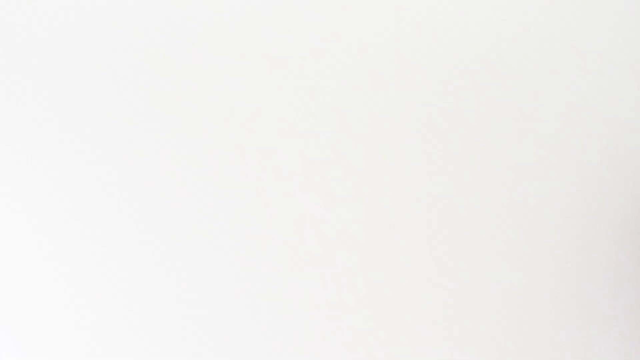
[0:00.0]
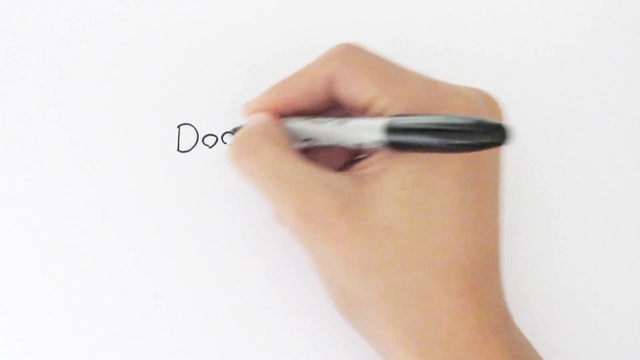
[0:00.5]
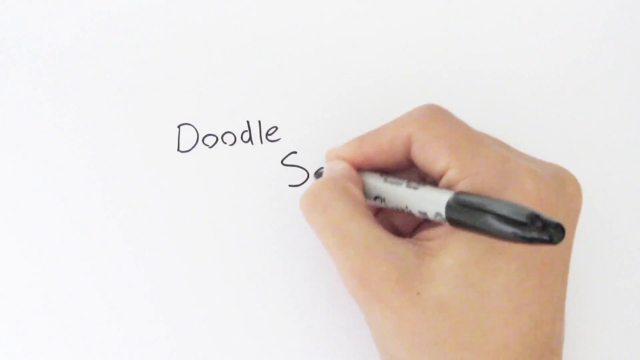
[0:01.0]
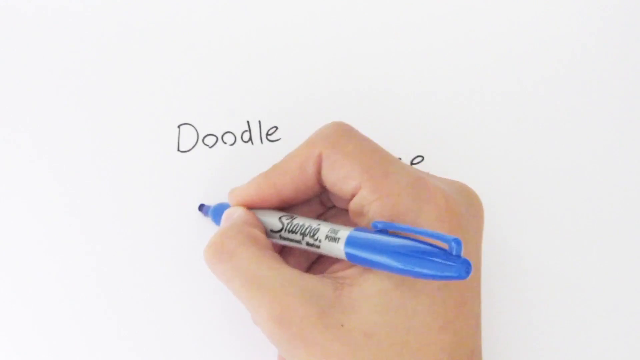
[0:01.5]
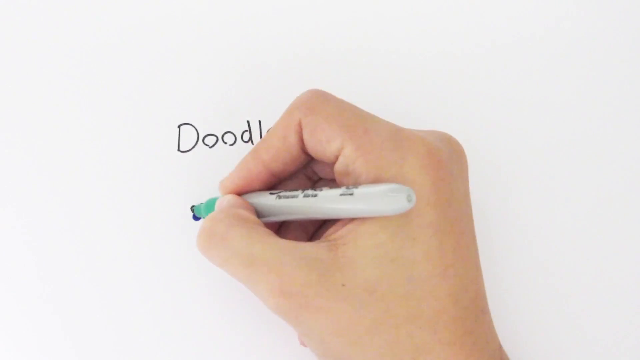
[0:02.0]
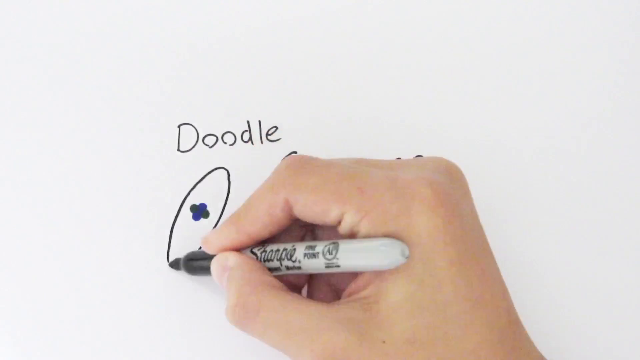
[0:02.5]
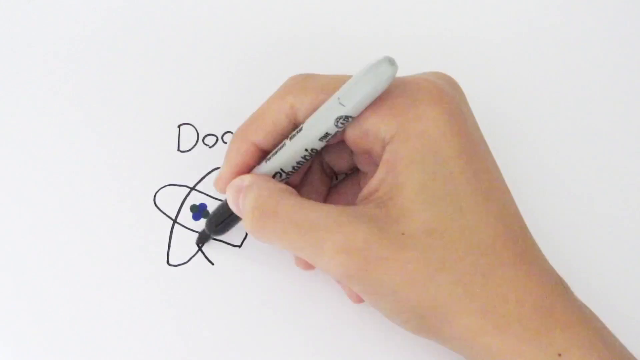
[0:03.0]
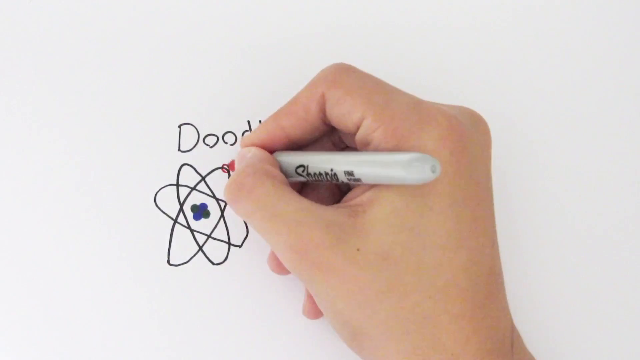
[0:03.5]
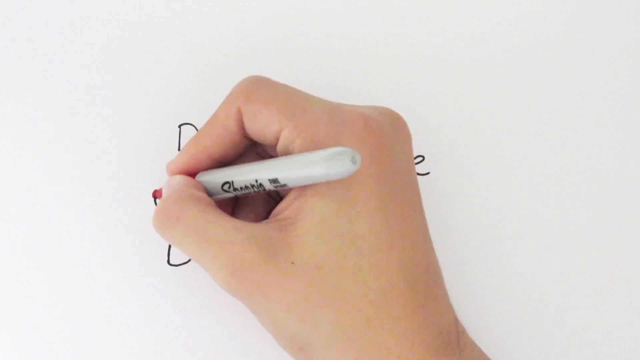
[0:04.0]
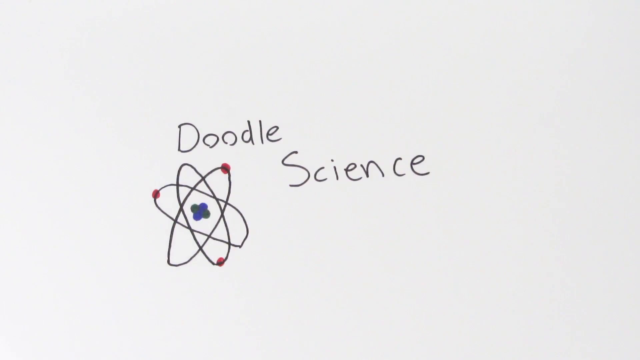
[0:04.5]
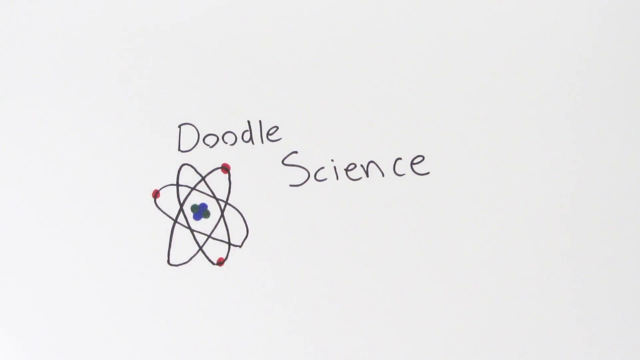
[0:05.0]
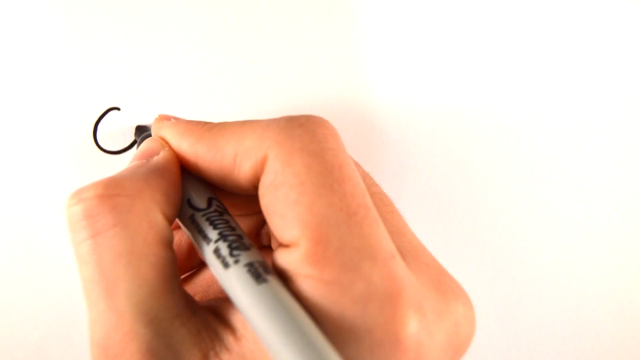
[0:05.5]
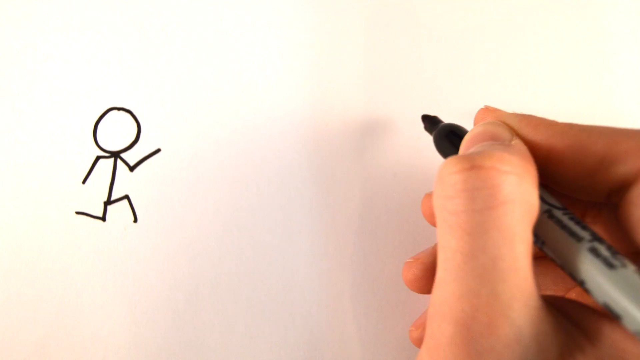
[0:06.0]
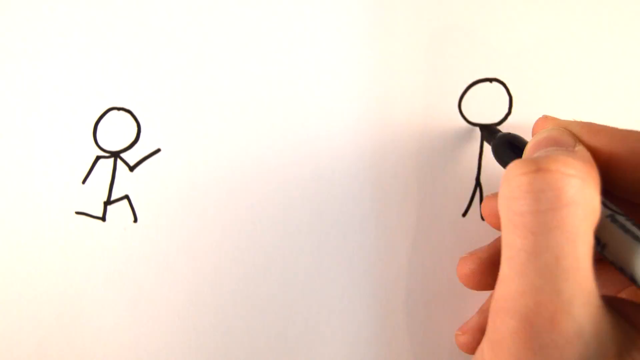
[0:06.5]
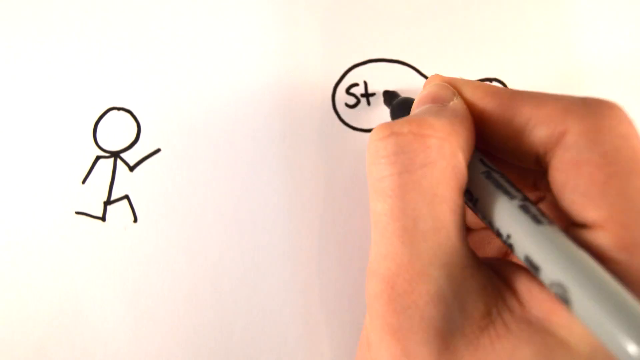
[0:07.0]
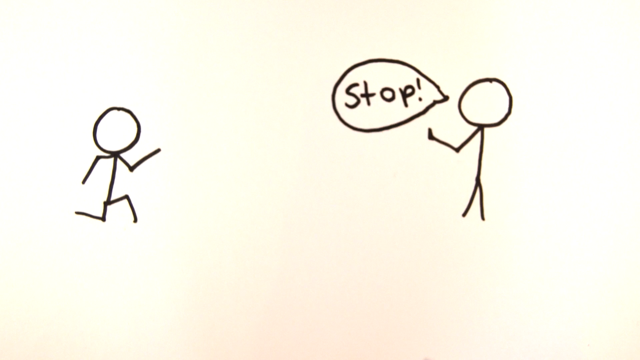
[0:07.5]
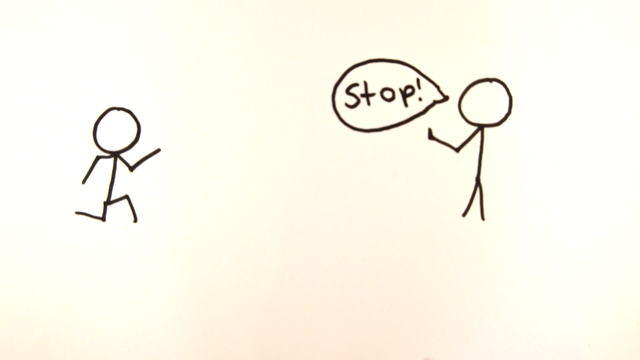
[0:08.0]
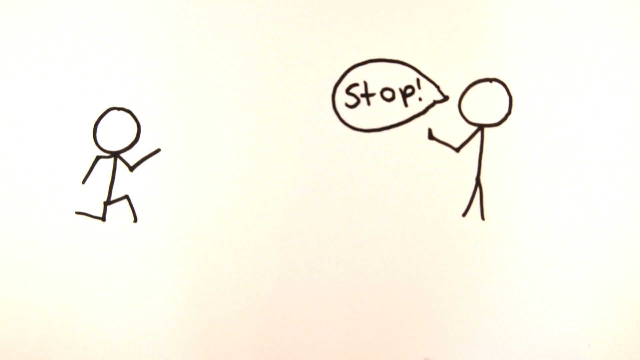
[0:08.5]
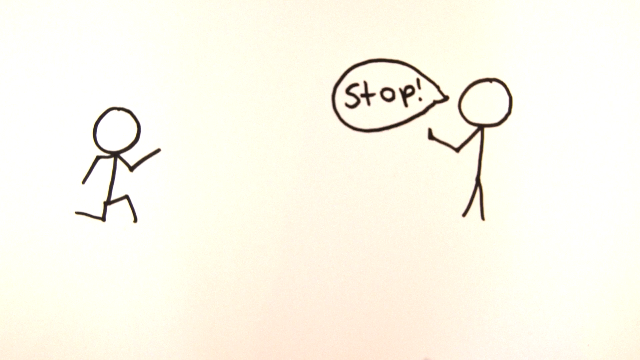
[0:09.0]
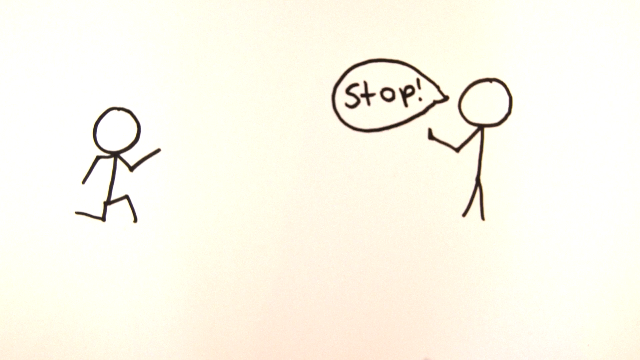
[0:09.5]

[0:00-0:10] Against a white background, someone holds a Sharpie with a black cap in their right hand, with the thumb on the left side of it touching the pointer finger on the other side, and apparently the middle finger touching it as well. The person writes "Doodle" (D-O-O-D-L-E), then "science", and then draws what looks like maybe an atom. Stick figures on the left side run toward the right side, and the figure on the right has a hand up, with a text bubble that says "start!"